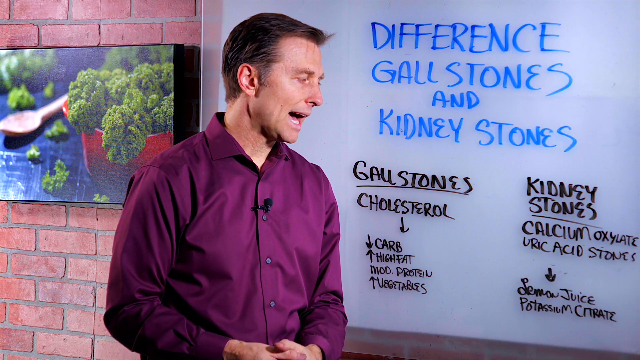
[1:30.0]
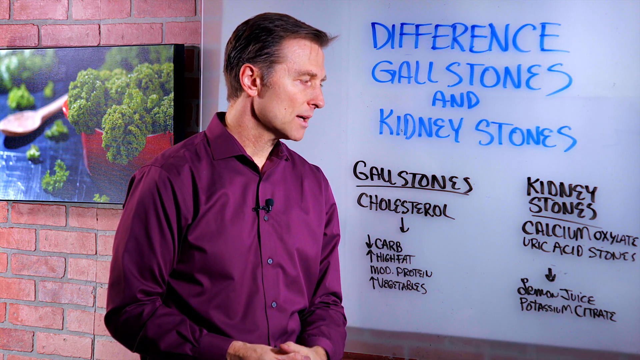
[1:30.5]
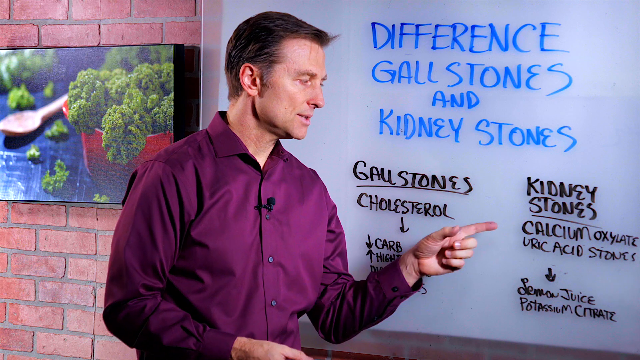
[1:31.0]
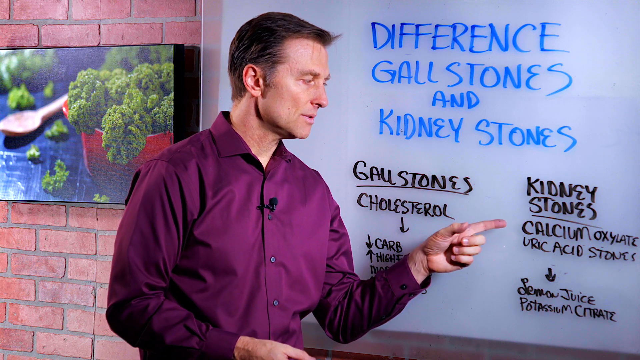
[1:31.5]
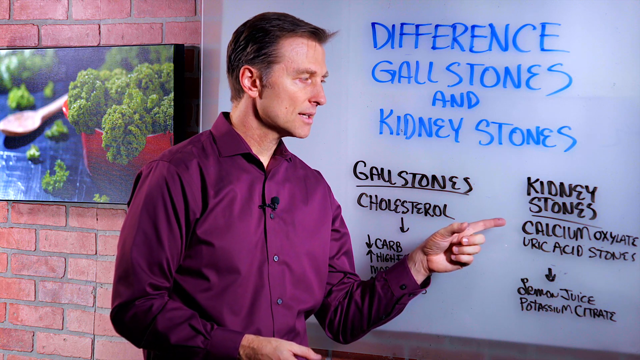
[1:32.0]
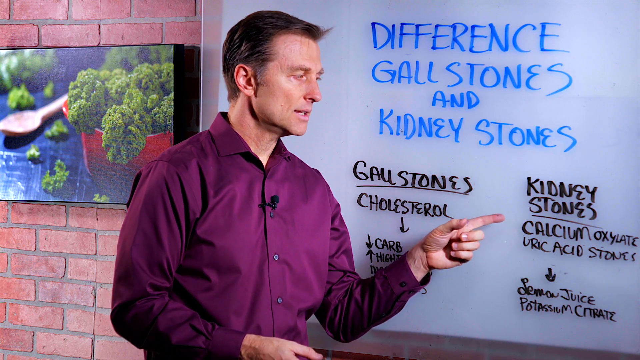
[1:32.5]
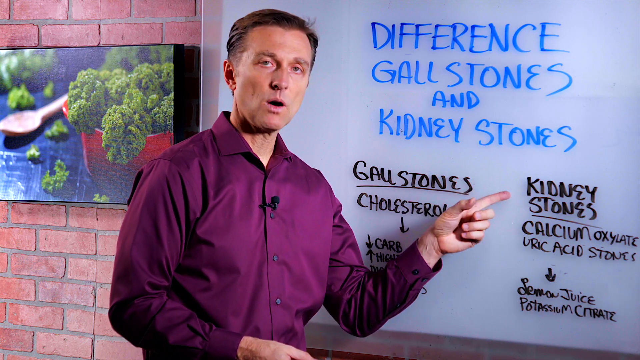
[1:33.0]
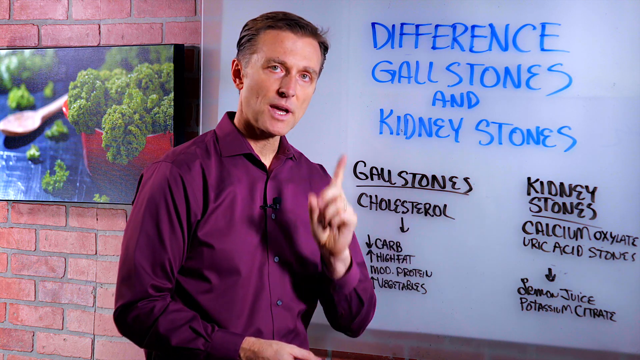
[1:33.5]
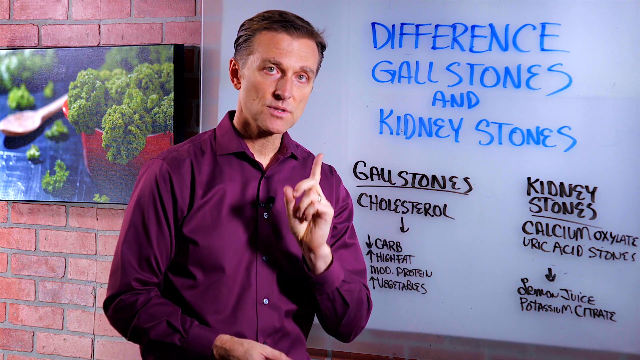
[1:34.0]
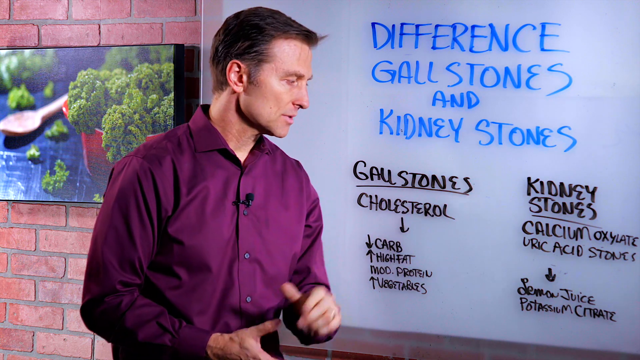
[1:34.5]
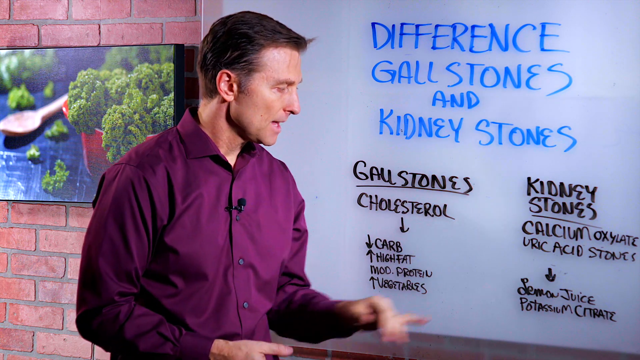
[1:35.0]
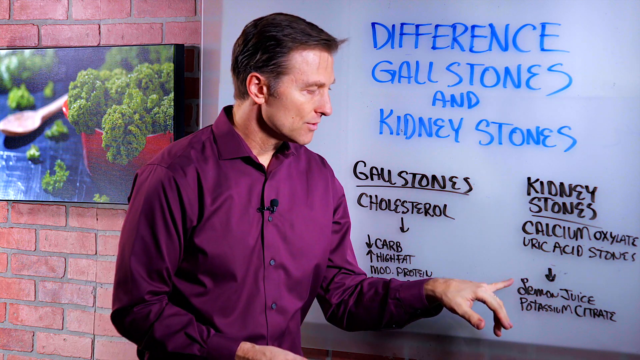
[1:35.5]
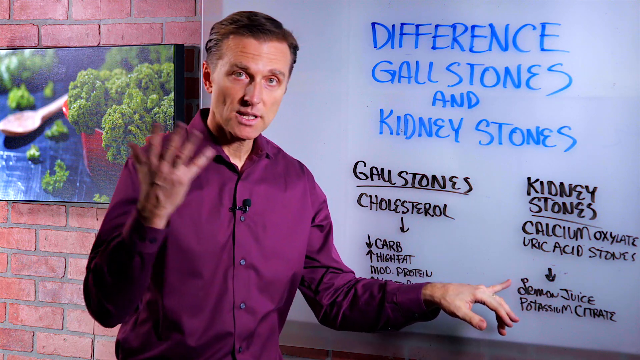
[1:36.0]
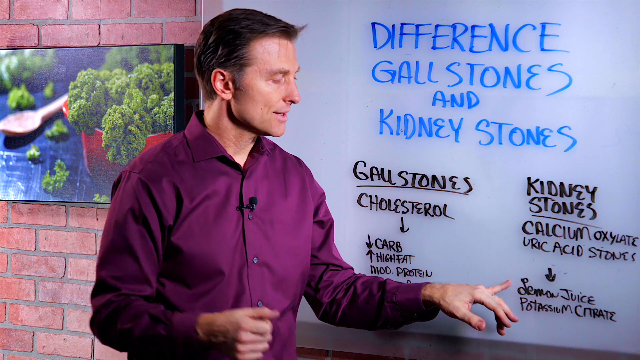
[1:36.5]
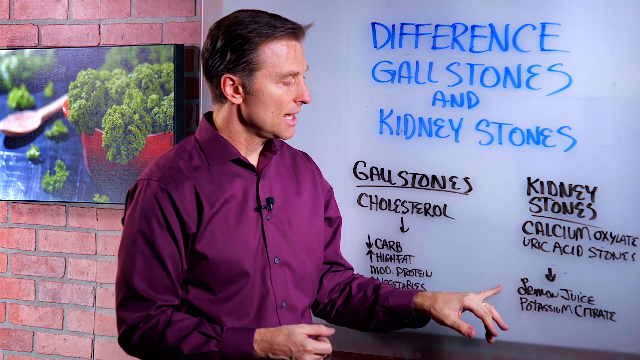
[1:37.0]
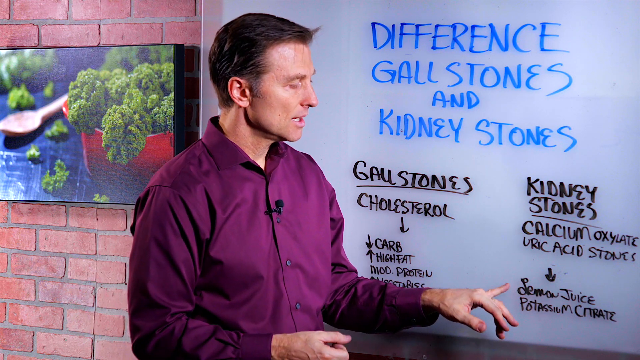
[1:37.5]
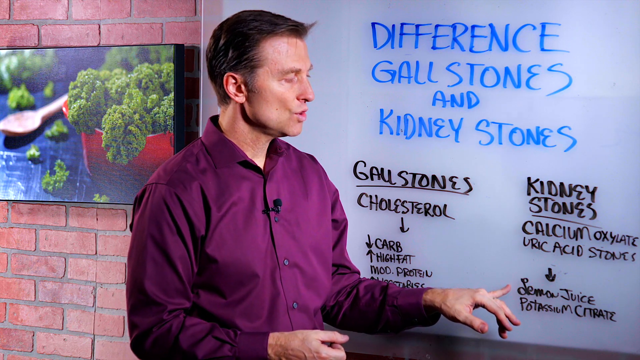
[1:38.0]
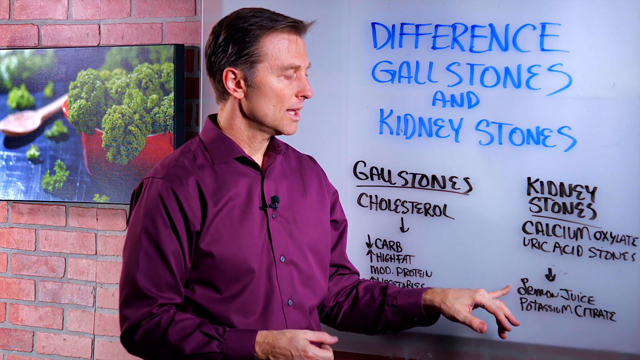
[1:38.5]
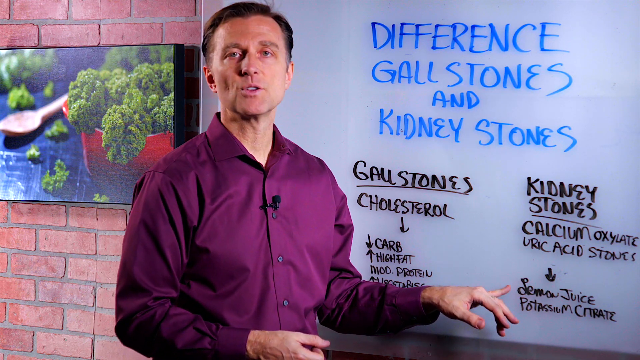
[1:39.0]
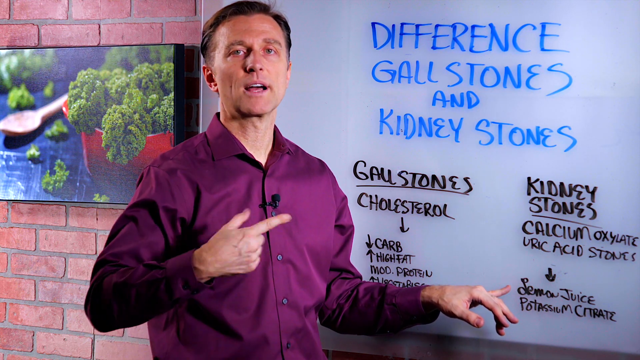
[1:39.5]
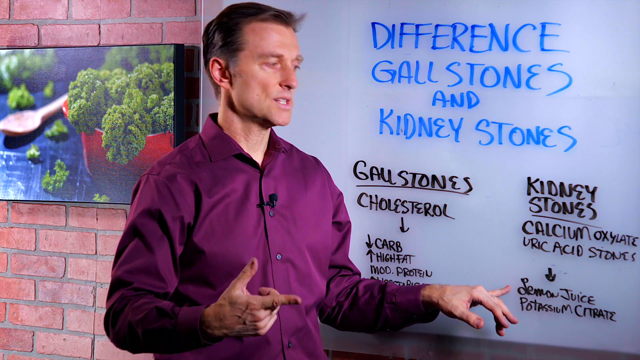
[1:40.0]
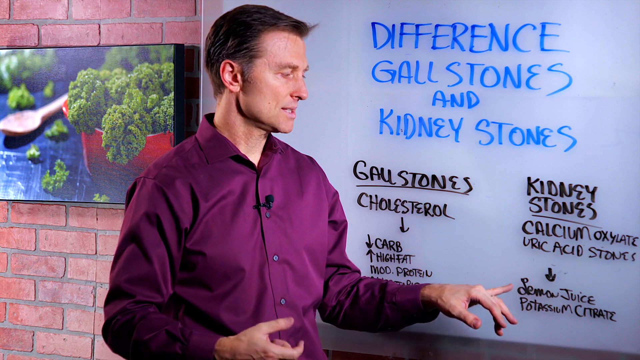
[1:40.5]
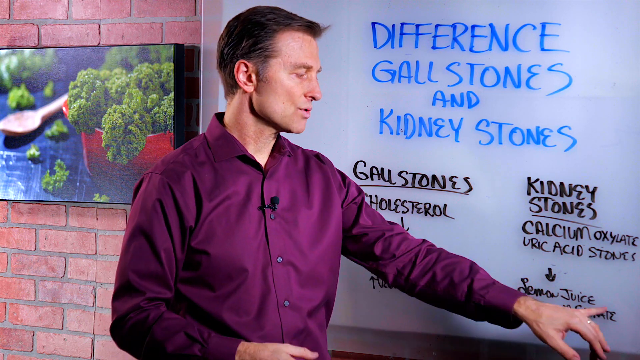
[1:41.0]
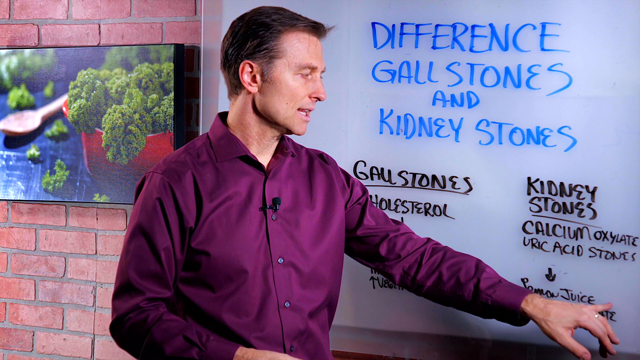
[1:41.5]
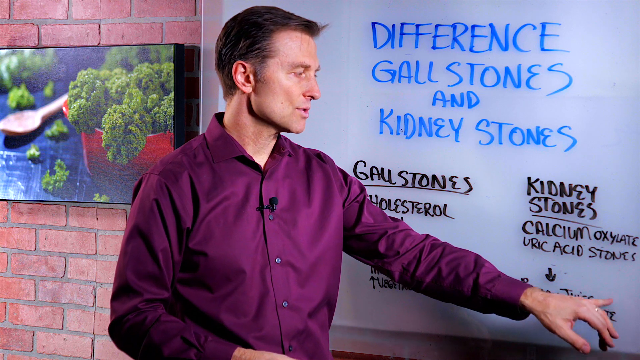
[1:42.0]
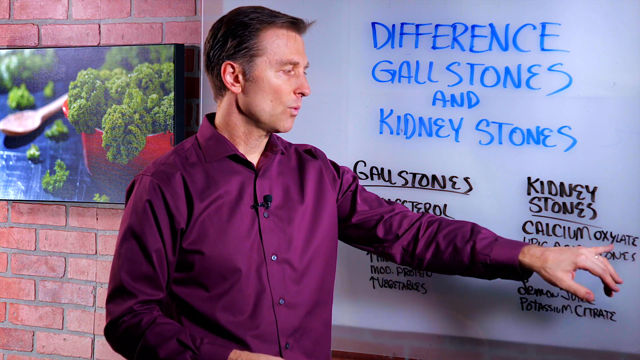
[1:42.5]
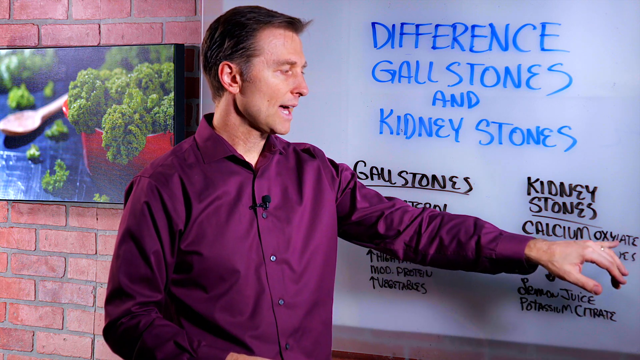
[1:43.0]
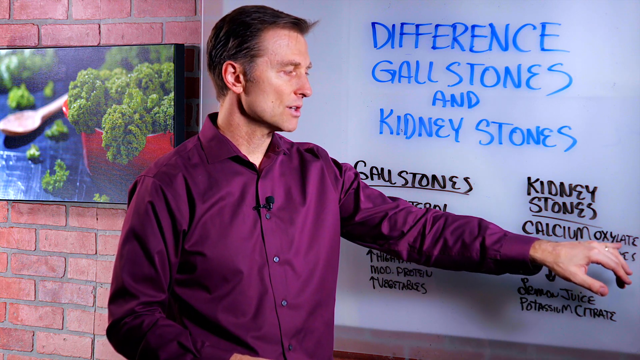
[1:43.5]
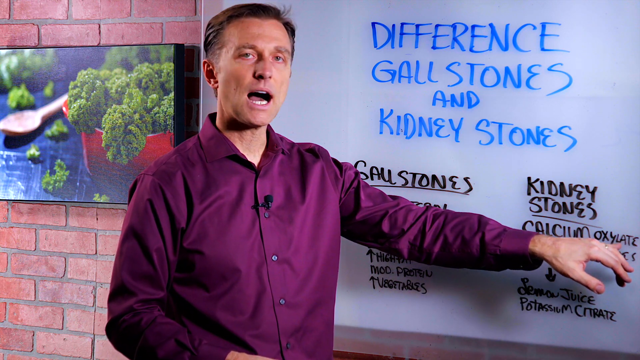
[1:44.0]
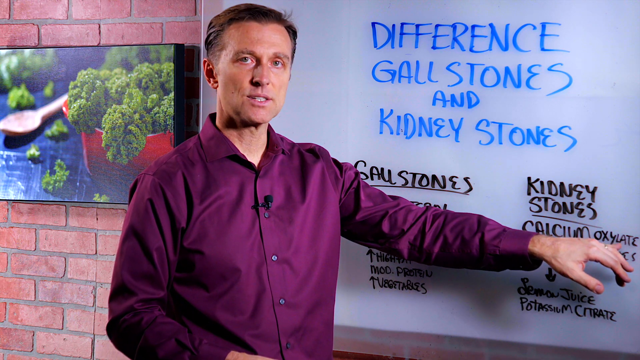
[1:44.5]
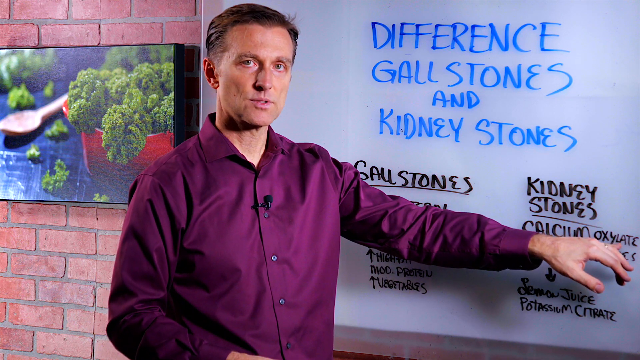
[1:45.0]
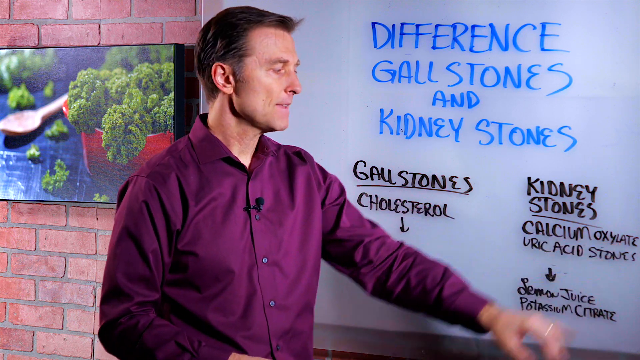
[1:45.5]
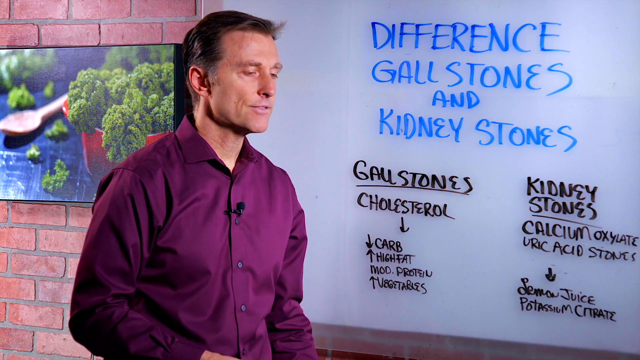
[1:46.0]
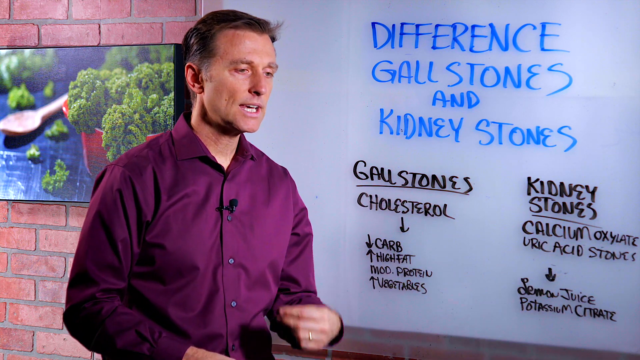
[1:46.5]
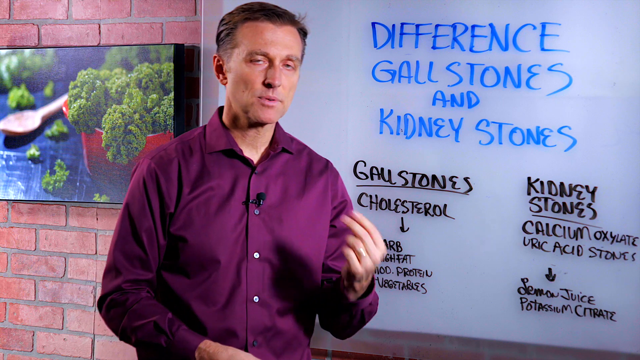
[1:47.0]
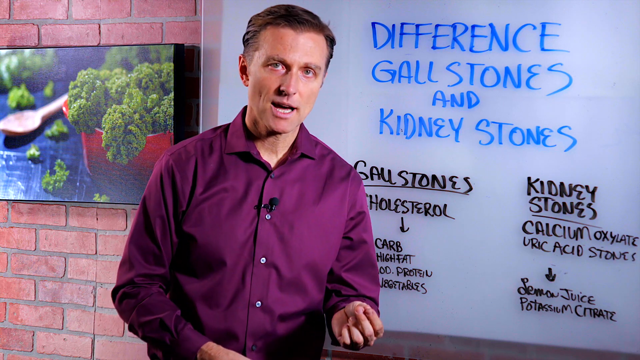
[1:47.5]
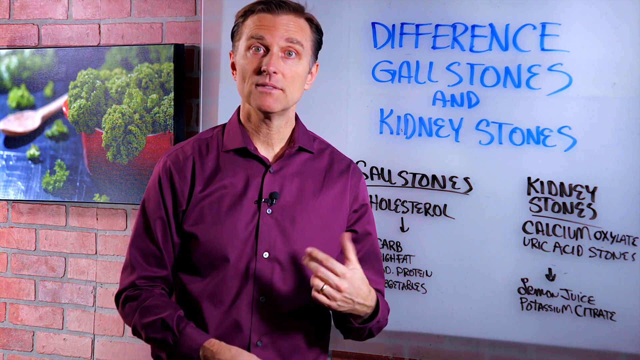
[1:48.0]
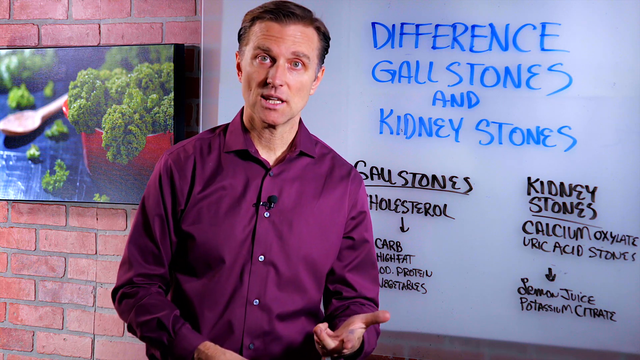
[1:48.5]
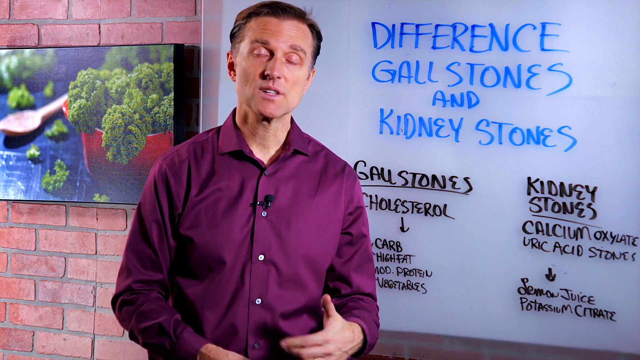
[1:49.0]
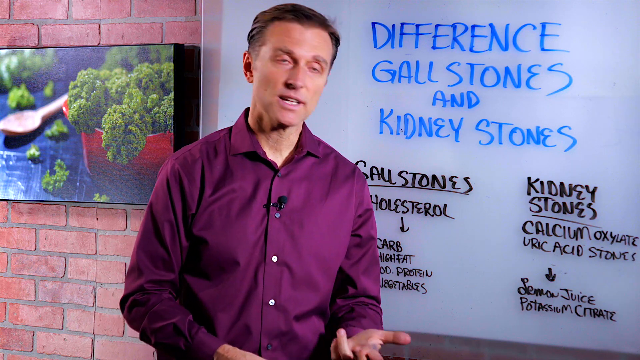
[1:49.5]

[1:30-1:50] The man in the purple button-down collared shirt stands in front of the whiteboard, which has writing in blue and in black. Behind him on the left is the red brick wall with the image of plant or vegetable material inside a red pot, a brown wooden spoon laying on a bluish surface, and bits of the vegetable scattered around. He talks and points his left index finger at the word "calcium oxalate", then points to "kidney stone" before turning toward the camera and gesturing with his index finger up. He then points at "lemon juice" with his left pinky and makes a circular motion with his right hand, index finger out and thumb up. He turns back toward the camera, continuing to talk and gesturing with his palms up toward the camera.